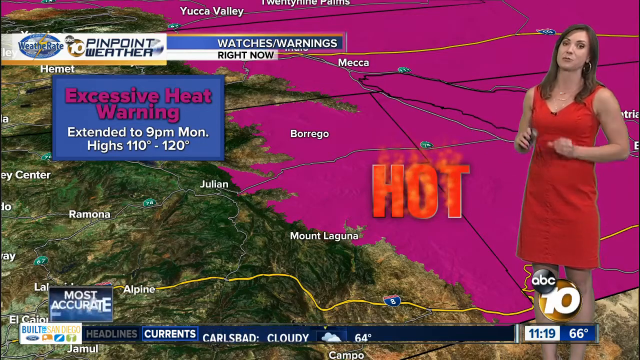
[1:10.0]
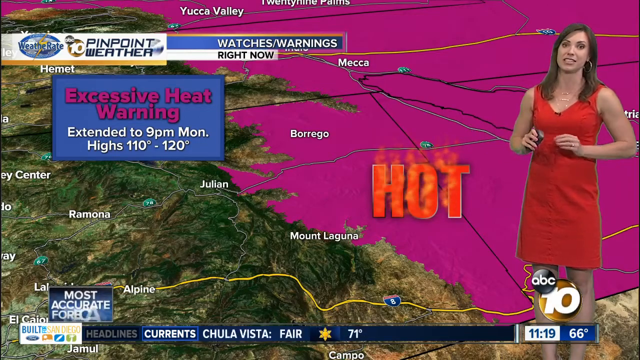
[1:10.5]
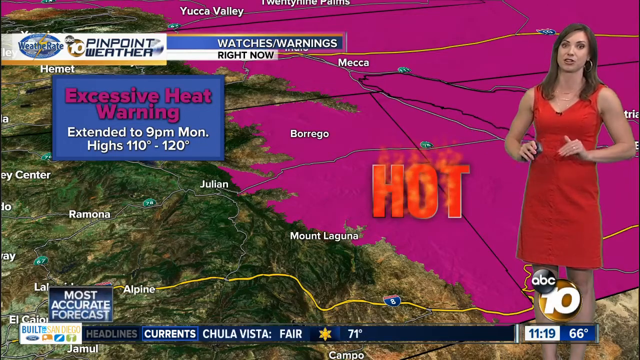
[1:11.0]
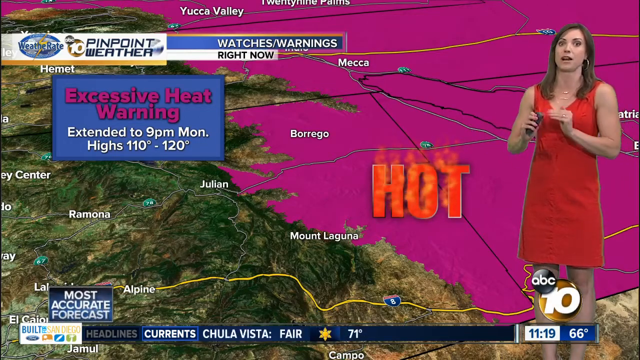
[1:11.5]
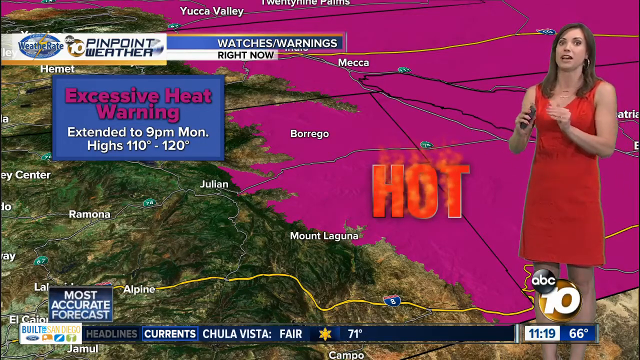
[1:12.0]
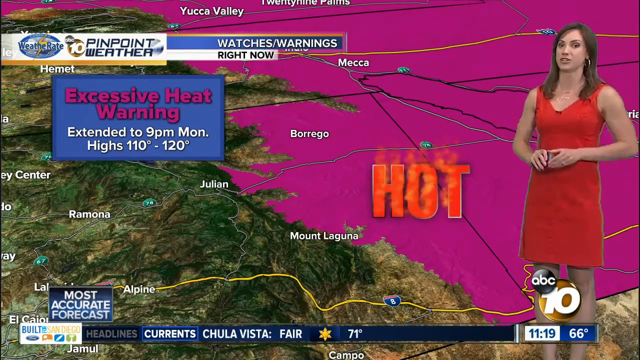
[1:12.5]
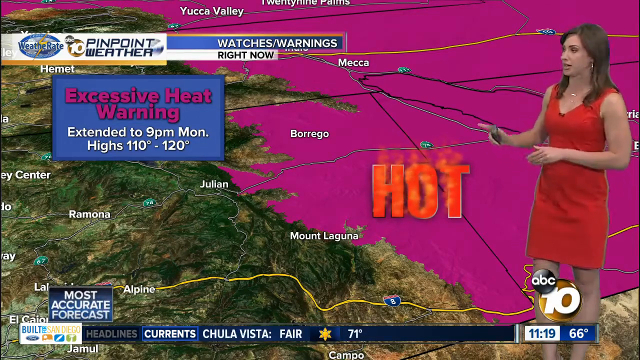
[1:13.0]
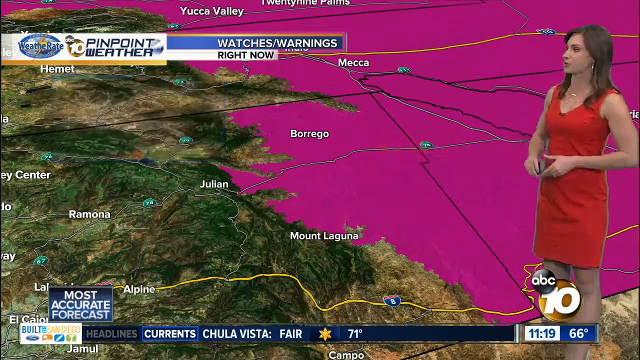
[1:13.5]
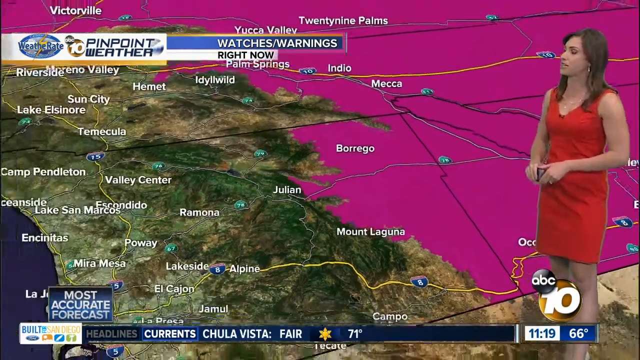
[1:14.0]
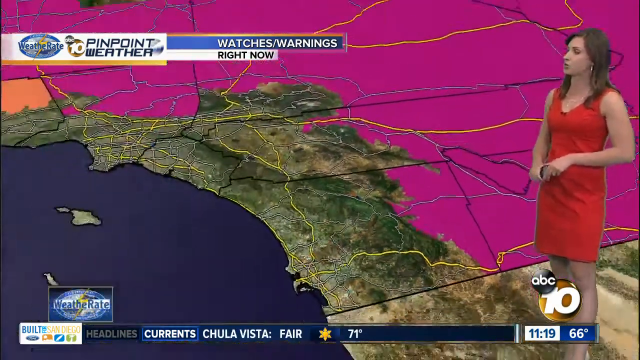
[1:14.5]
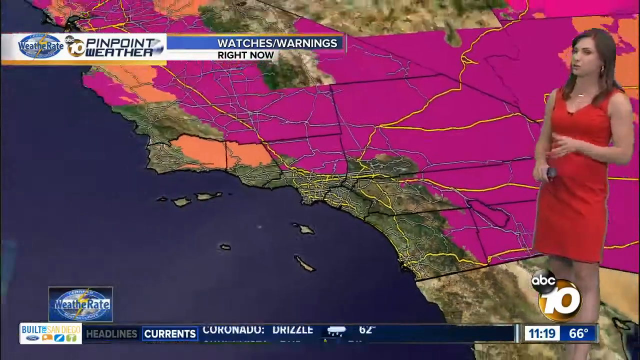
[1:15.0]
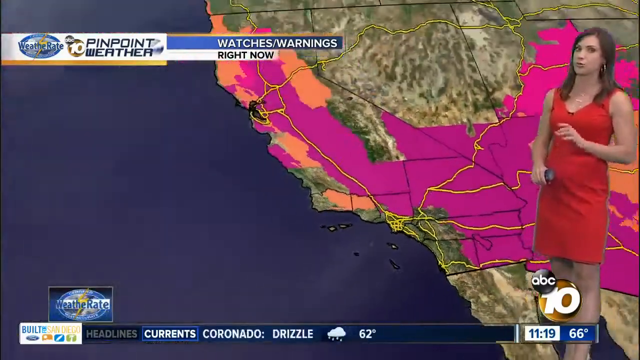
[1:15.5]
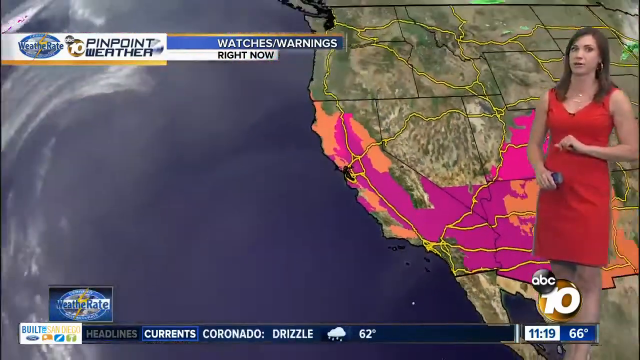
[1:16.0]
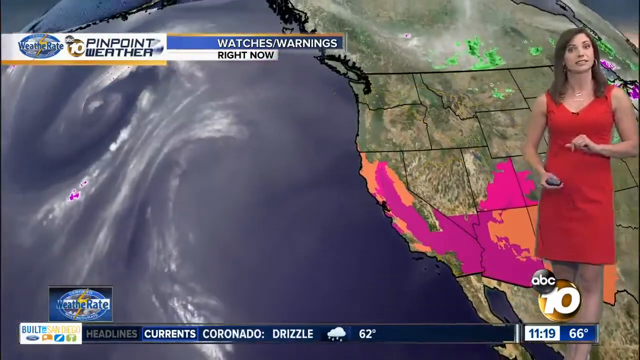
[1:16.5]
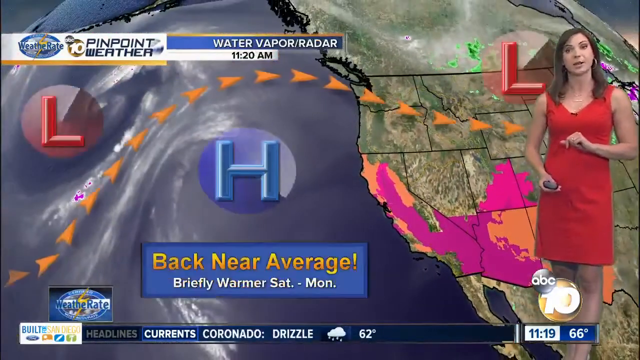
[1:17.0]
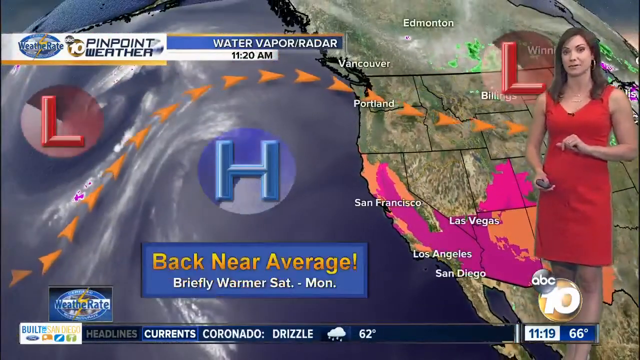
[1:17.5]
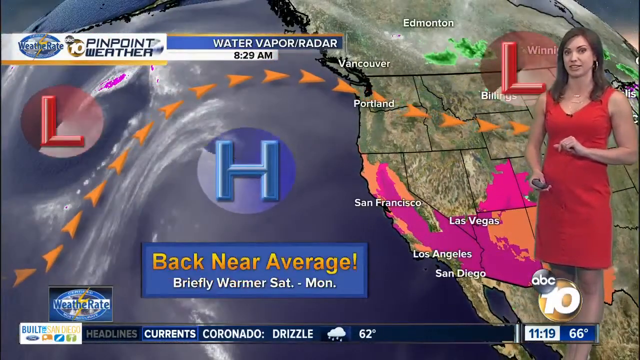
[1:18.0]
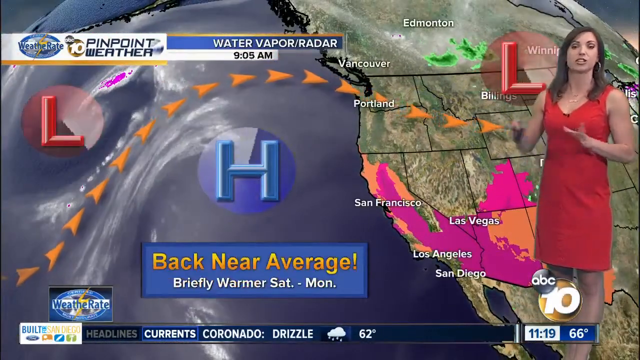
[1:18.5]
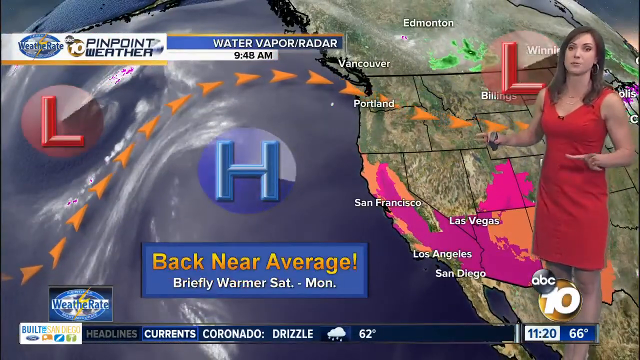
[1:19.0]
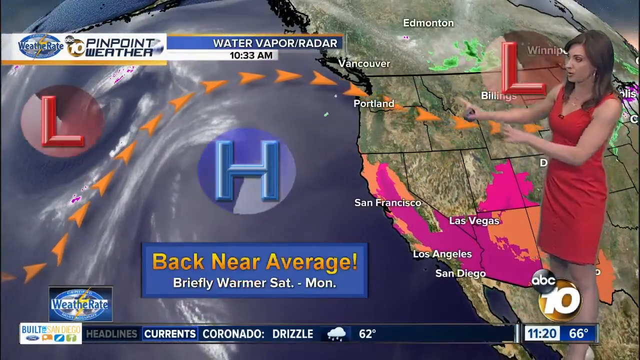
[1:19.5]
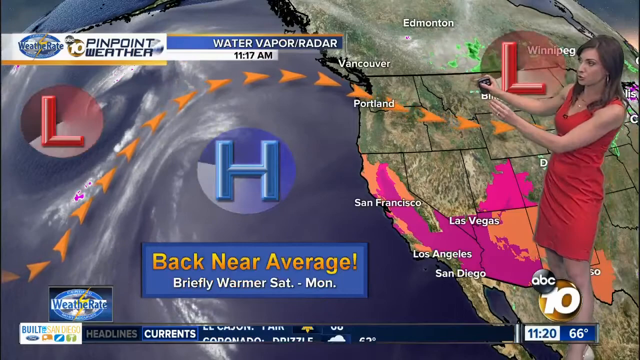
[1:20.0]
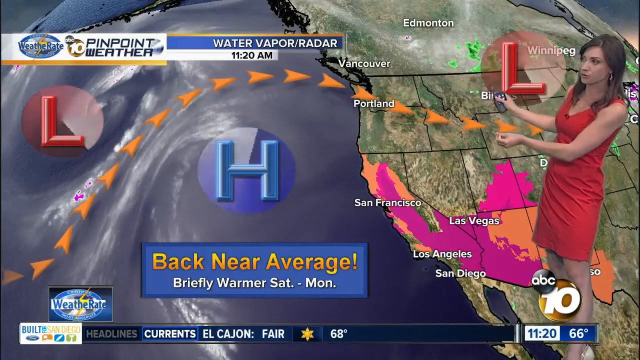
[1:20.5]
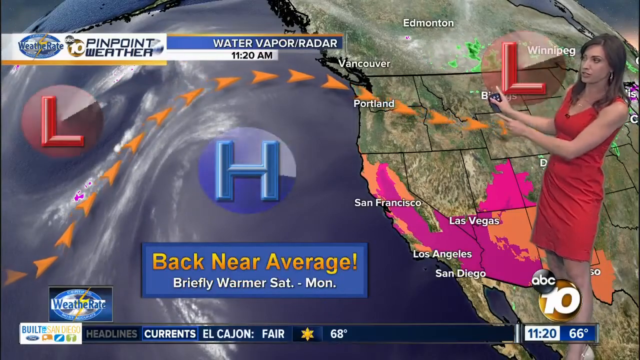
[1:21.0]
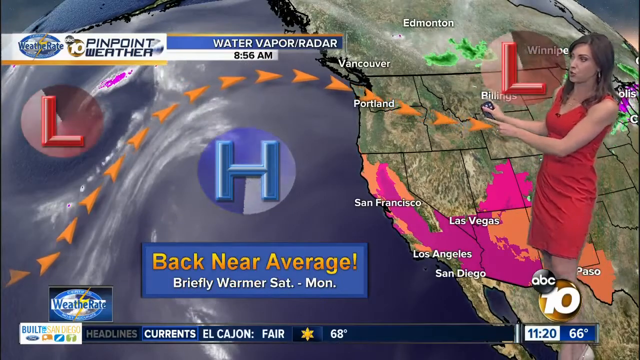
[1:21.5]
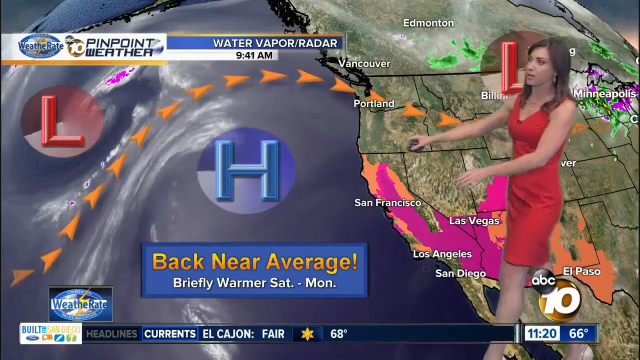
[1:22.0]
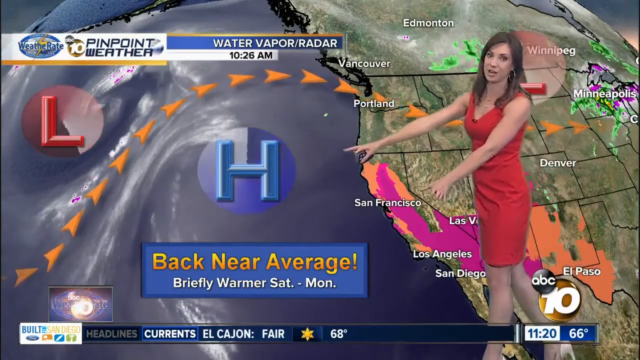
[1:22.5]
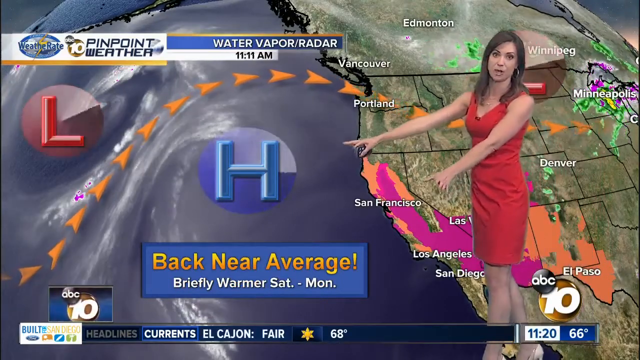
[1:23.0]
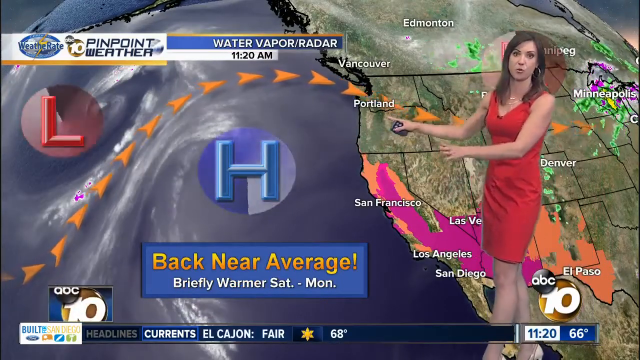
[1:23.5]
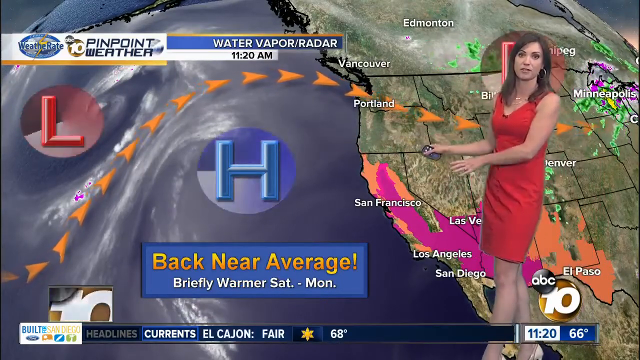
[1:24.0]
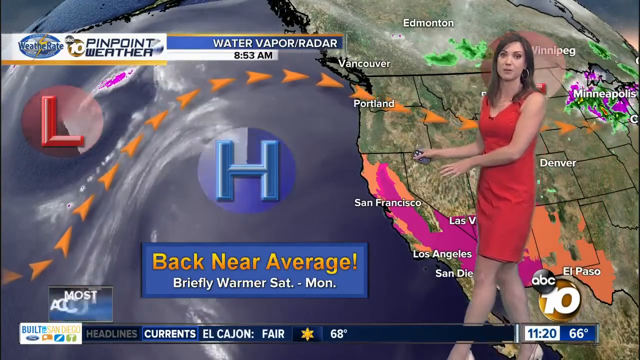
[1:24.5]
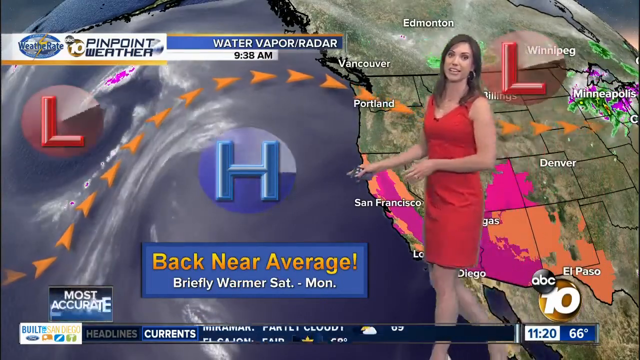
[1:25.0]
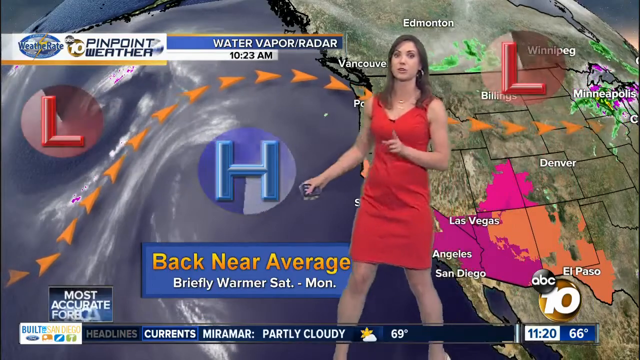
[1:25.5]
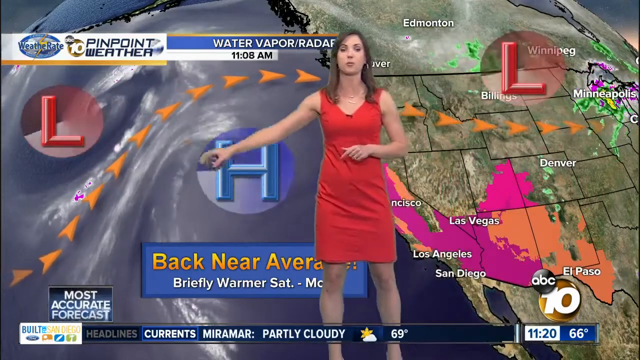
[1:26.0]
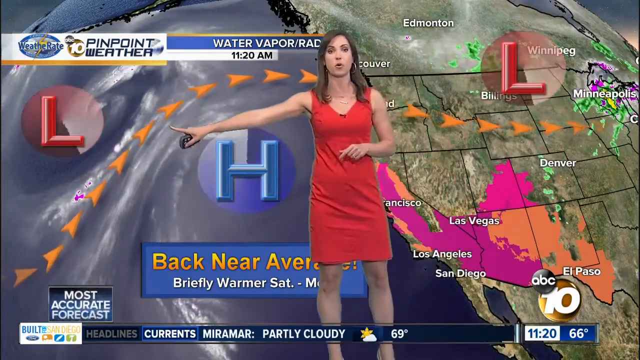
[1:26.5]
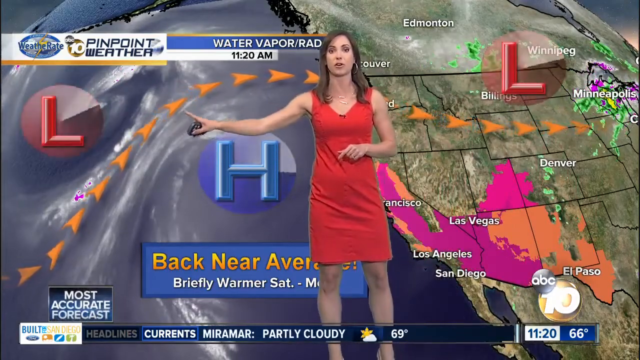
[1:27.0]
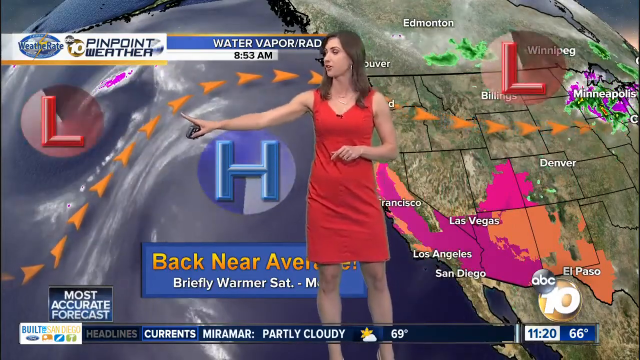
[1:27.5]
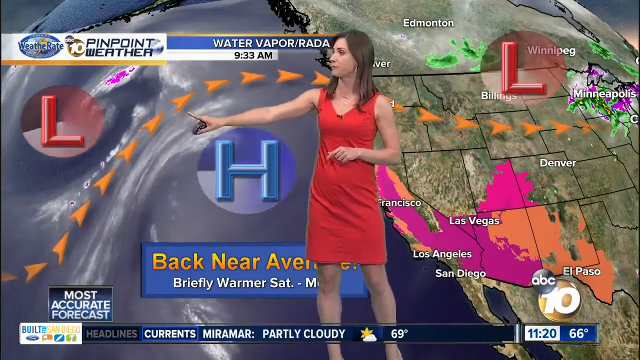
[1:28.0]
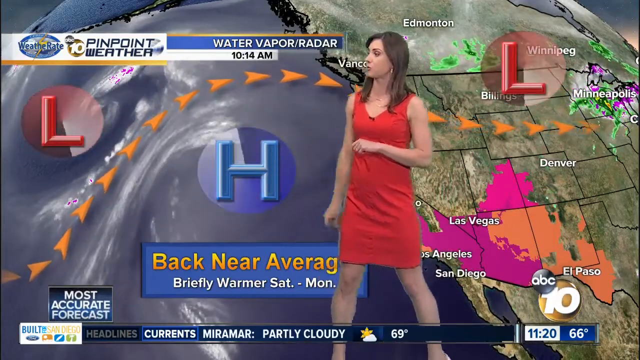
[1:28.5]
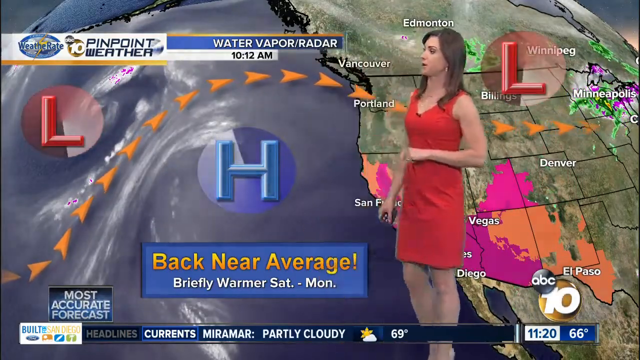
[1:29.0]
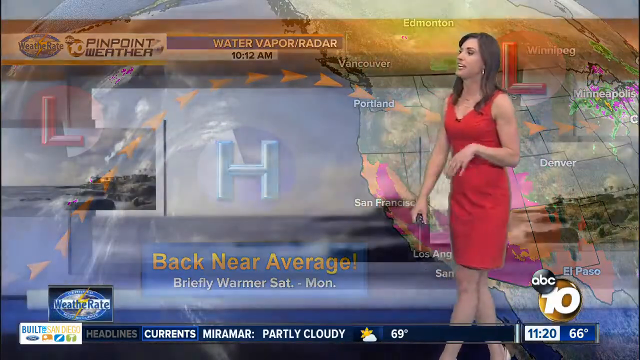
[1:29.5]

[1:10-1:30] Text reads "back near average briefly warmer Saturday, Monday," and water vapor imagery is shown as the presenter, a woman in a red blouse, goes through how it moves over the cities.